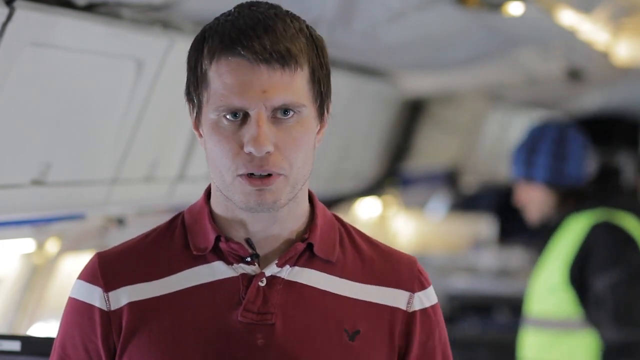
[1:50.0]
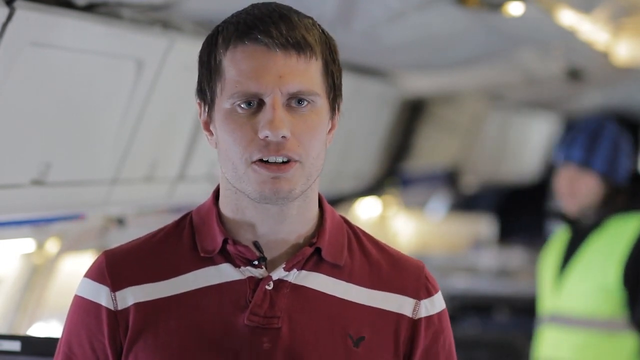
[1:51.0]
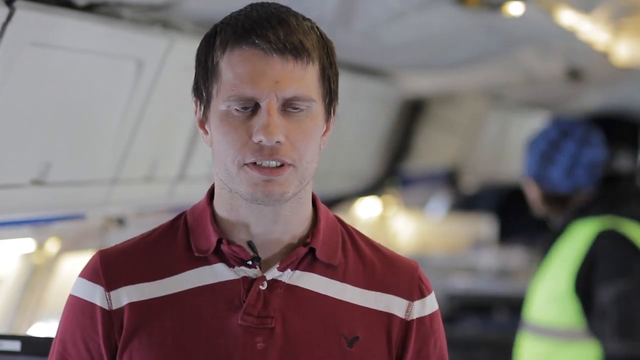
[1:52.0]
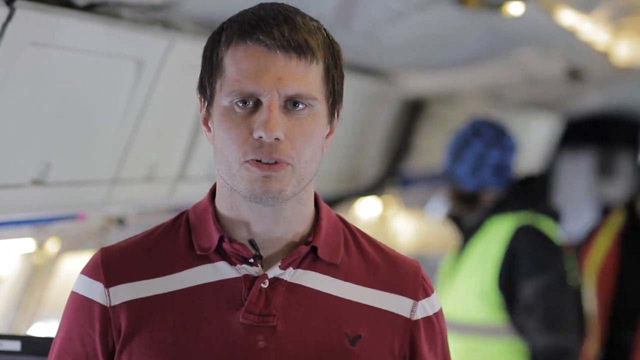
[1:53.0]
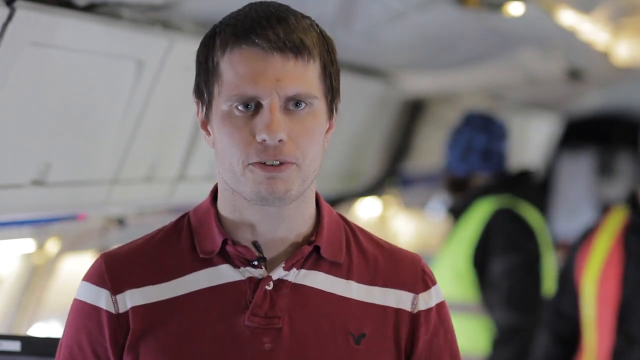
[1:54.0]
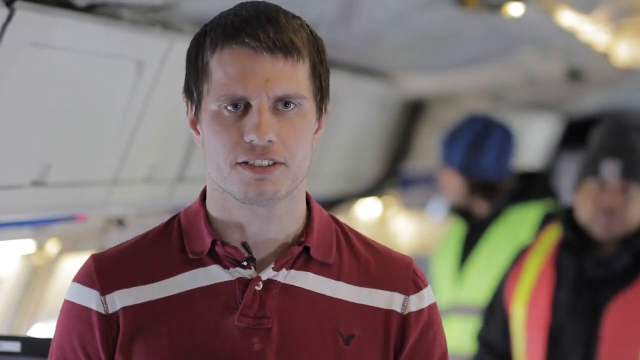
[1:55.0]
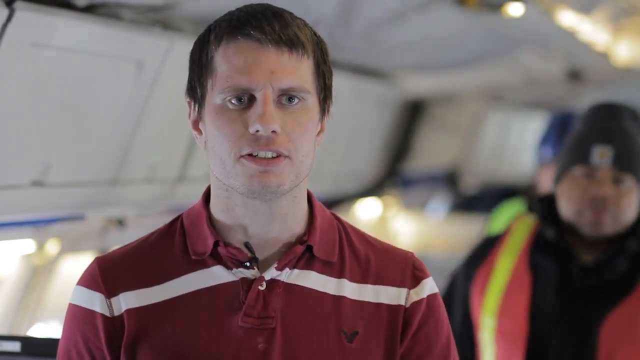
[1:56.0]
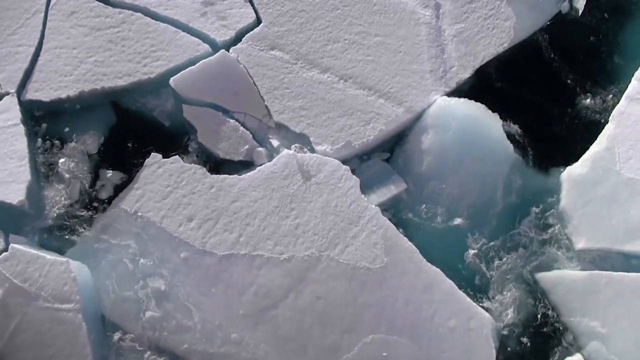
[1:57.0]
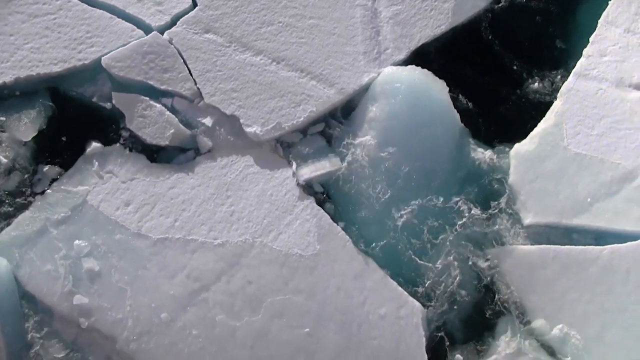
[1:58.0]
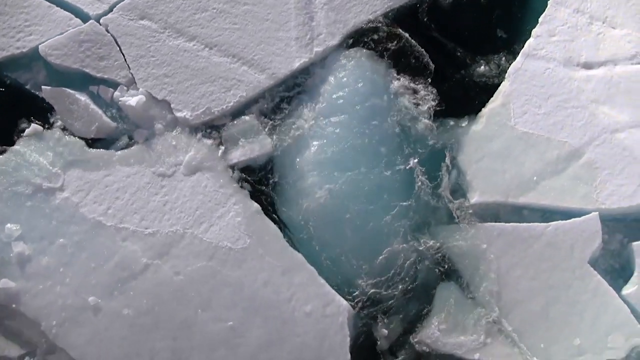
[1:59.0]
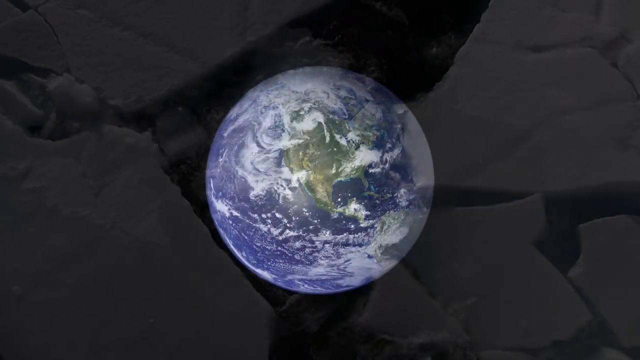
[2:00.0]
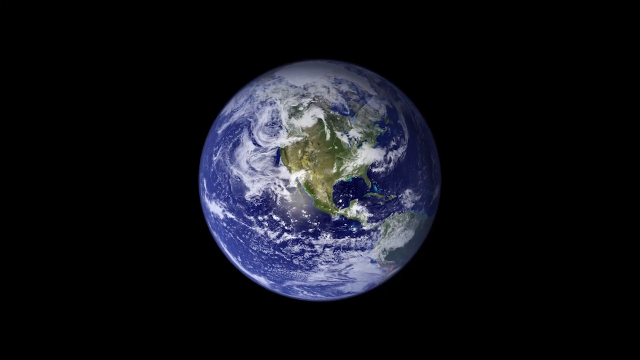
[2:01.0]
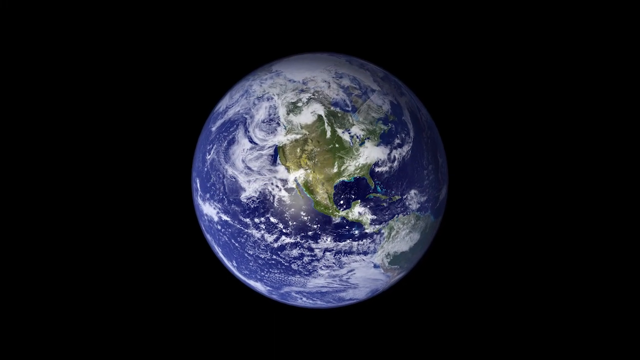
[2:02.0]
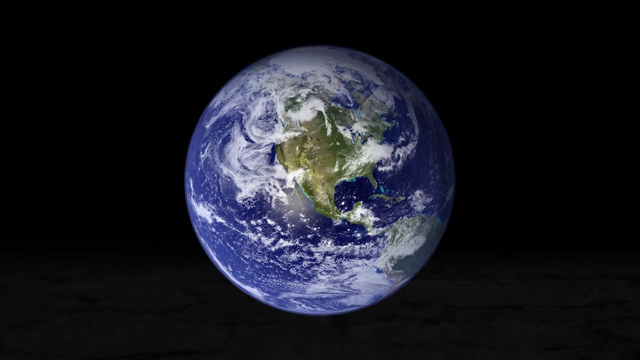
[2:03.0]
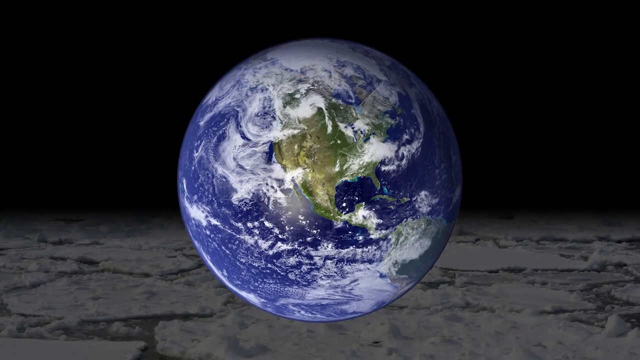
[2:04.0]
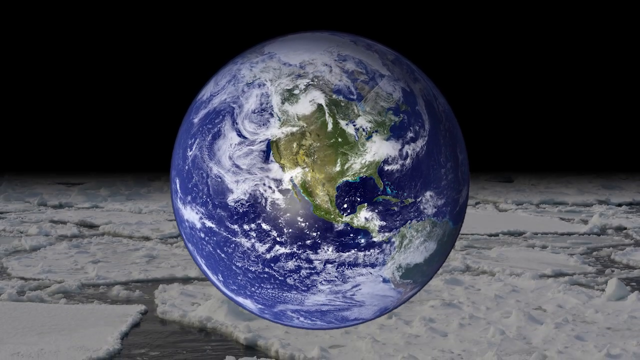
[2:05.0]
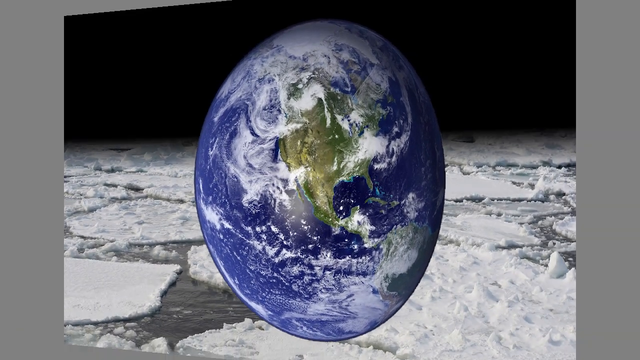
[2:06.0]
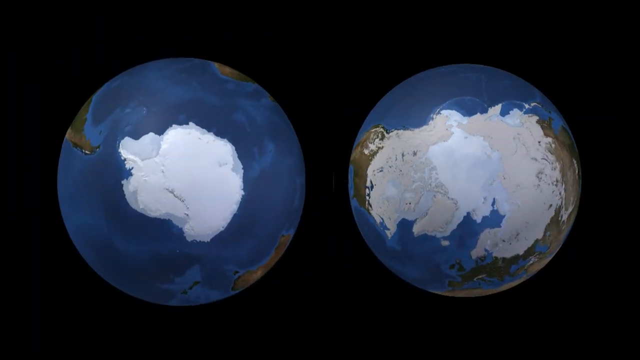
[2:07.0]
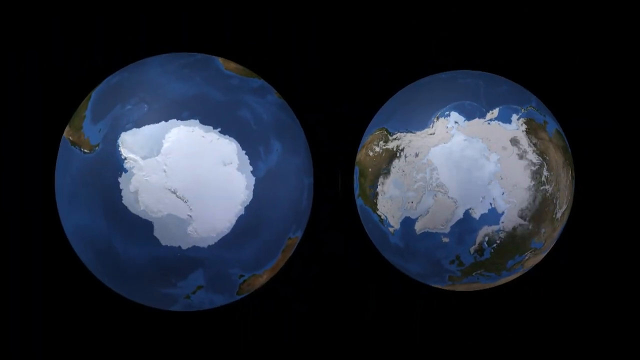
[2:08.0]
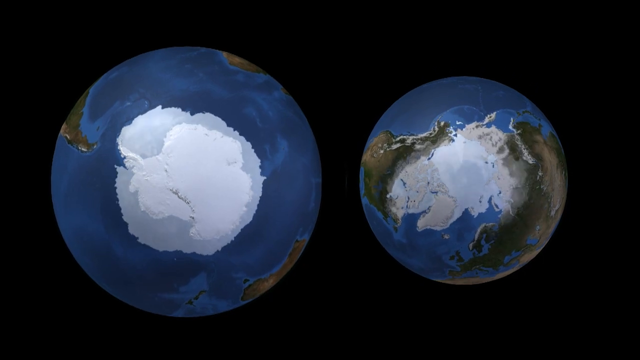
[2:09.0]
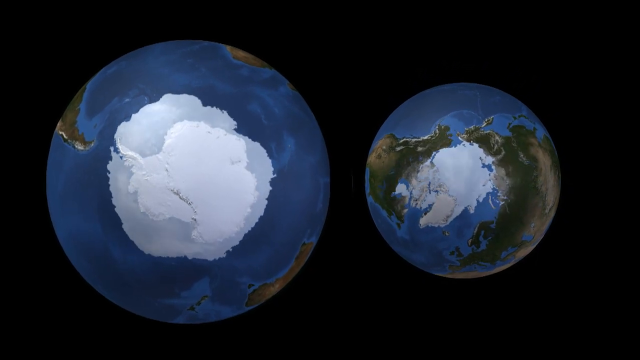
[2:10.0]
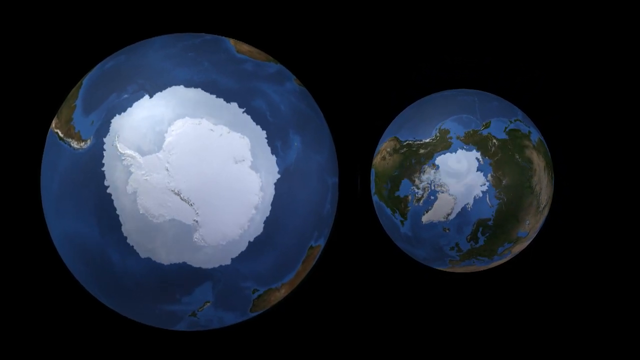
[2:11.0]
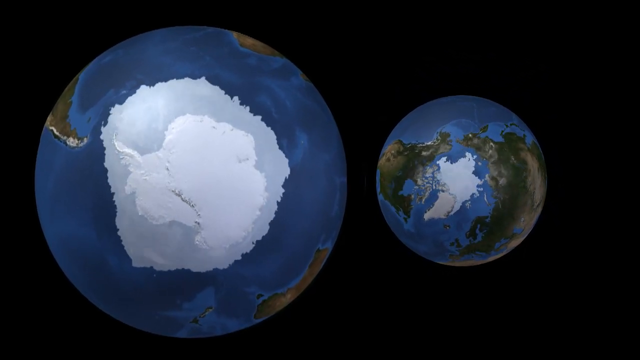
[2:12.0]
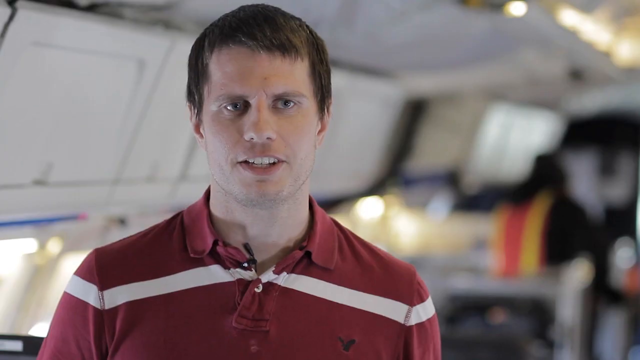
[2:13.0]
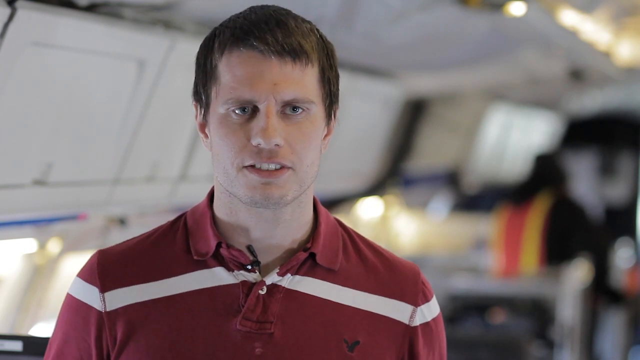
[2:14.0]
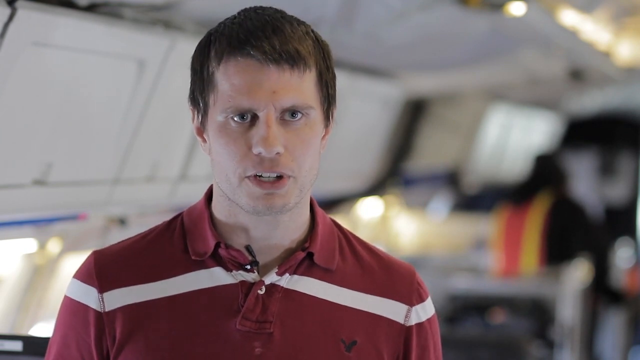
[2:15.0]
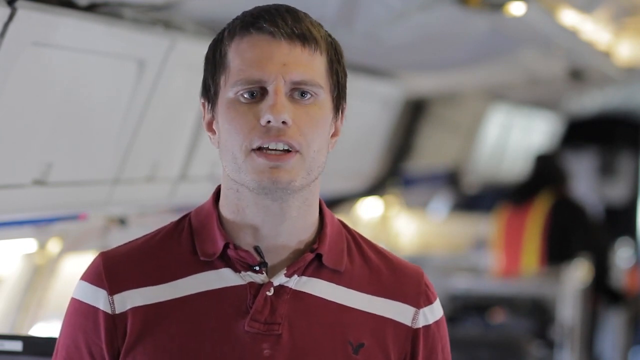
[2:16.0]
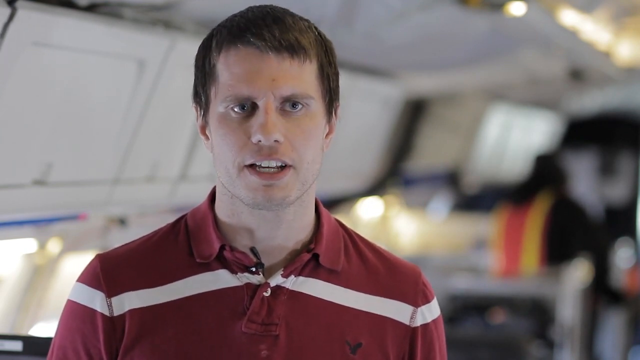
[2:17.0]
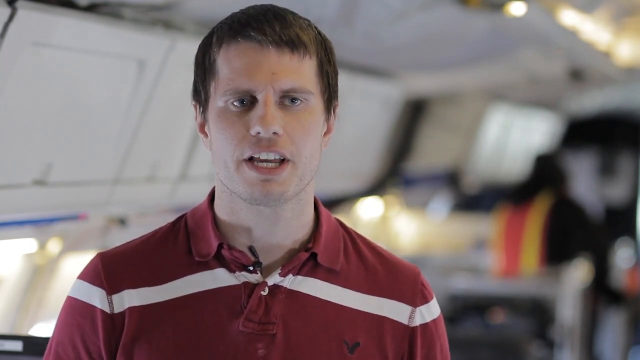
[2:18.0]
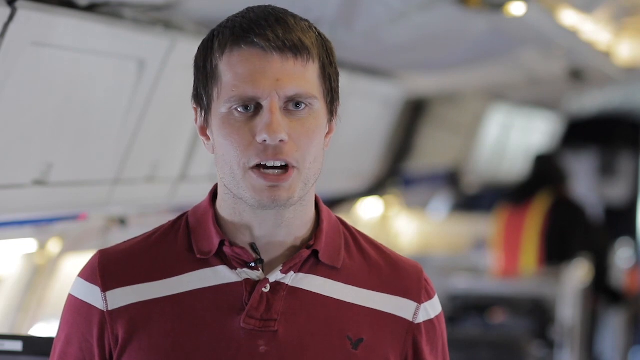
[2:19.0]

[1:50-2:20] A Caucasian man in a red and white shirt talks, with people behind him in what look like utility construction vests. He has a microphone on his shirt and talks with his hands; he is apparently a scientist from NASA. An up-close shot shows ice breaking and melting, with a lot of ice seeming to break off into the water. A global view of the Earth follows, then a comparison of the Earth apparently showing it starting with a lot of snow and ice that shrinks over the years.